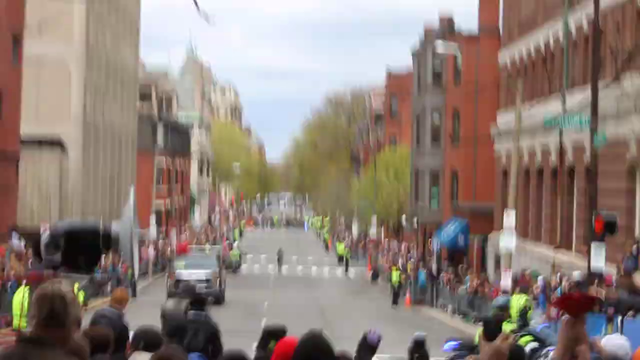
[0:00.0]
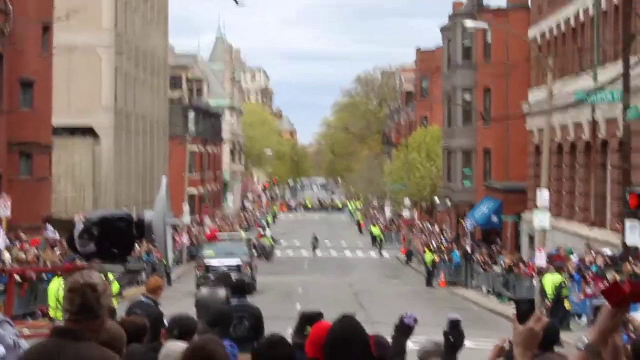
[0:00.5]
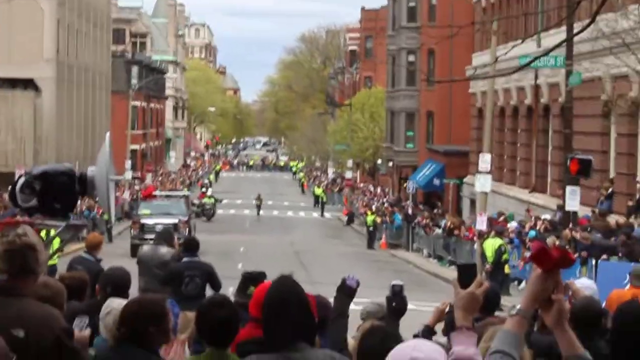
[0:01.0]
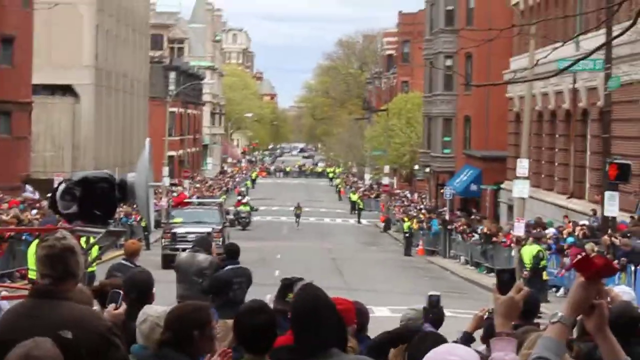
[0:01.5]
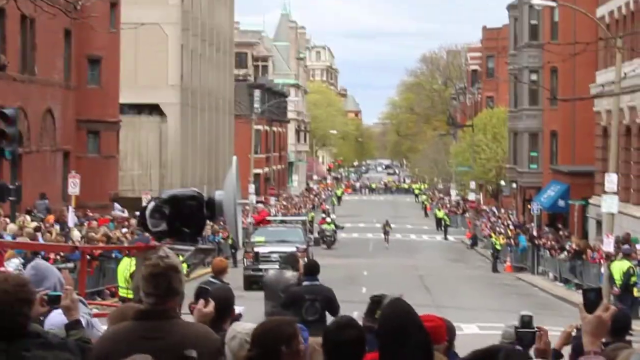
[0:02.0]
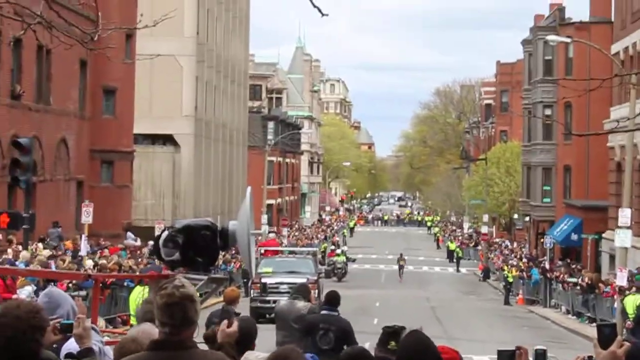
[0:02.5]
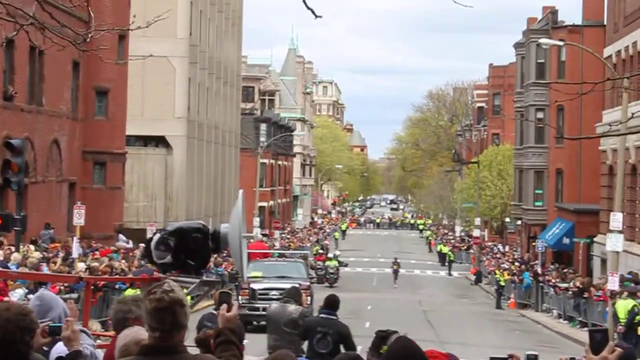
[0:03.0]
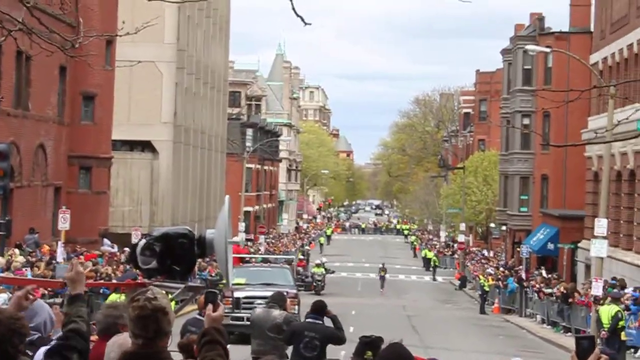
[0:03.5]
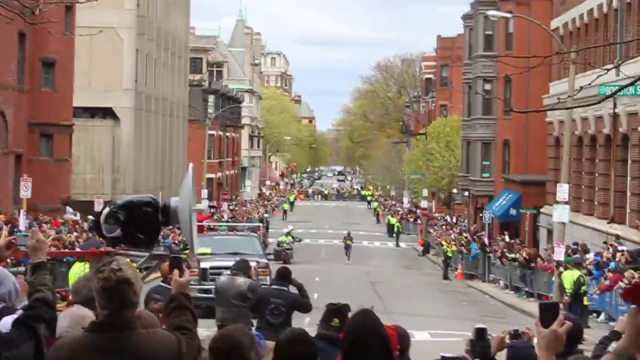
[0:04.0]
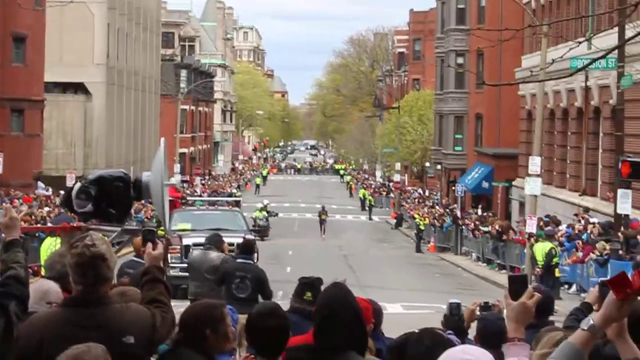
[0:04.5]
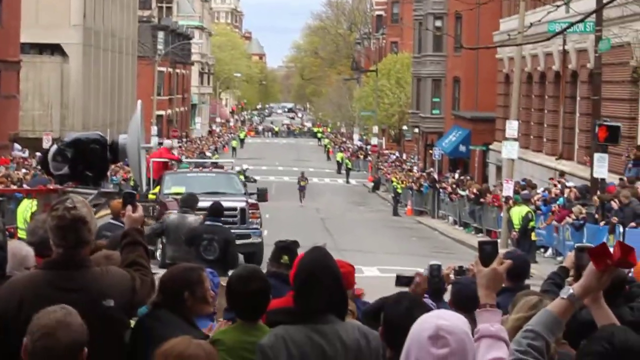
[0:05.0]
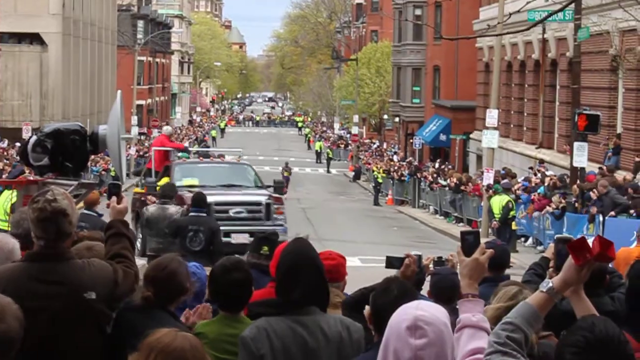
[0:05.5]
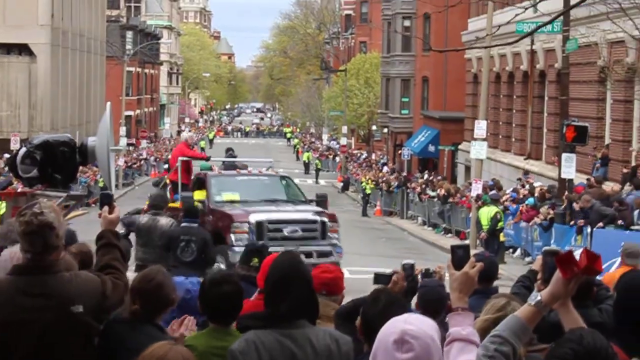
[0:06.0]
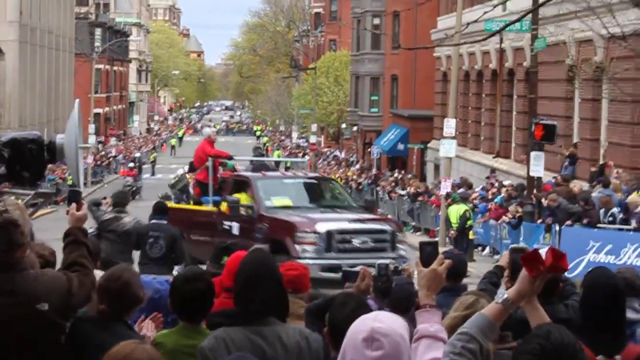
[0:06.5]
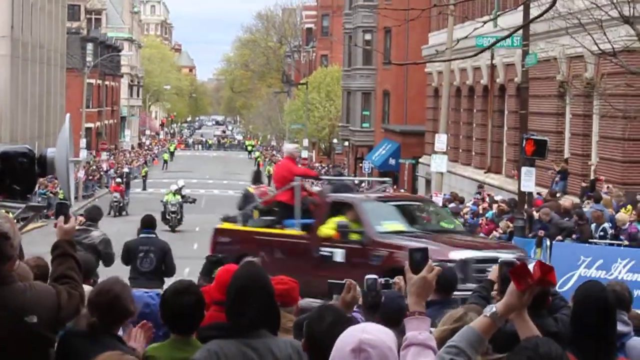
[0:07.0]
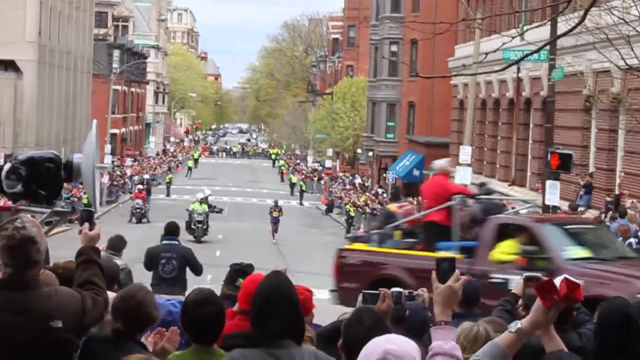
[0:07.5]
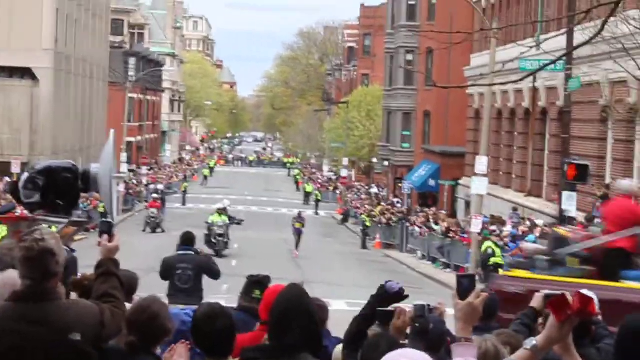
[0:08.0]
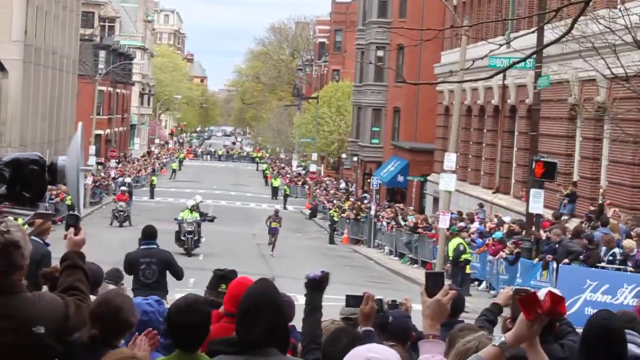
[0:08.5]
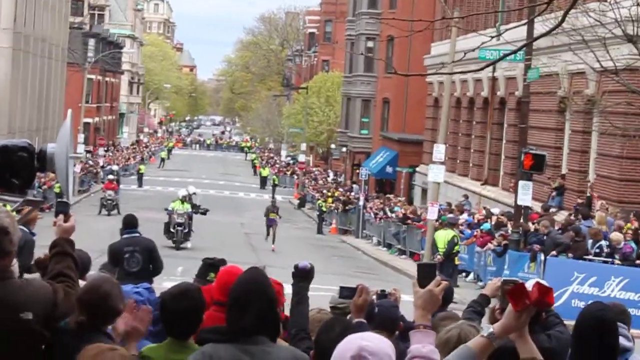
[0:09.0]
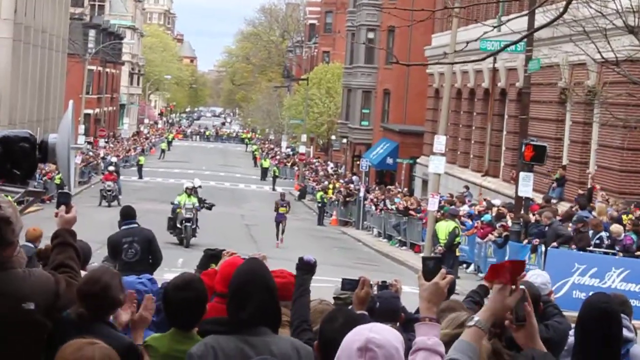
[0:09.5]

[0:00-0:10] The scene is outdoors in a city, with buildings on either side of a street and the camera aiming down the street. The camera is very shaky. A lot of people are outside, a big audience apparently there to watch something. Someone drives by in a truck, with several people in the back holding on to some railing or support. Apparently a policeman on a motorcycle follows, so it looks like an escort of some kind, and the crowd seems to be there to watch an event, a parade, or somebody entering an event. The city cannot be identified; the buildings look fairly nondescript. There are some awnings, barricades, a few banners with sponsors' names on the barricades, street signs, and traffic lights. It all looks very ordinary, but it looks like someone is being escorted somewhere in some kind of formal event.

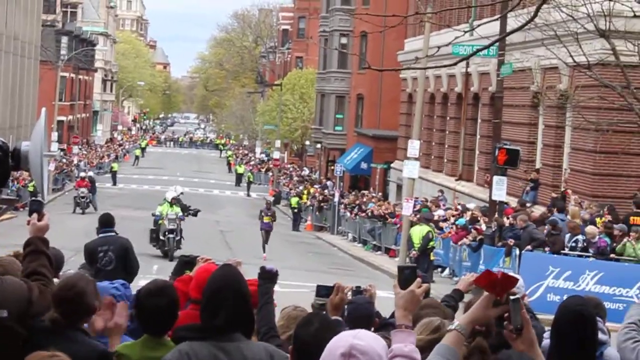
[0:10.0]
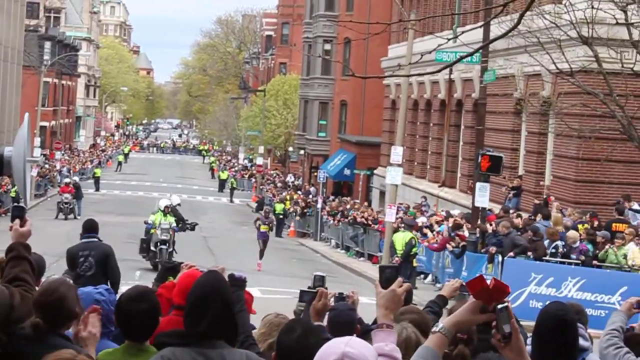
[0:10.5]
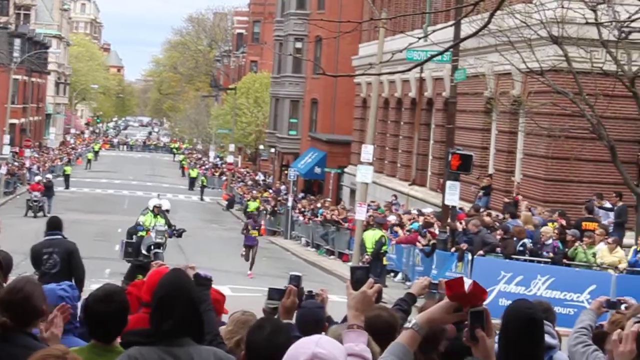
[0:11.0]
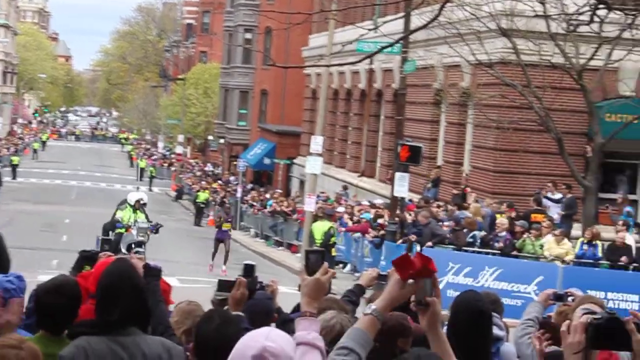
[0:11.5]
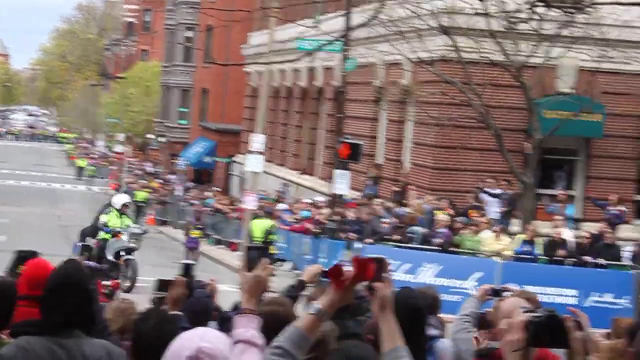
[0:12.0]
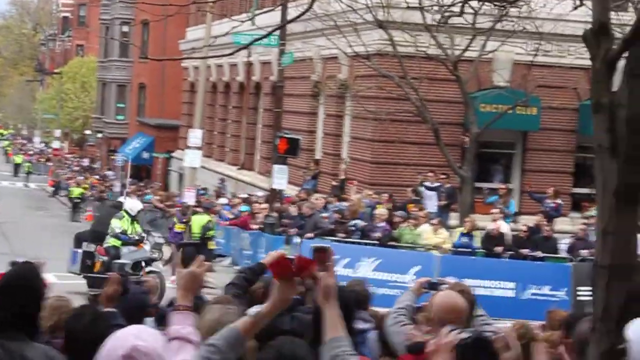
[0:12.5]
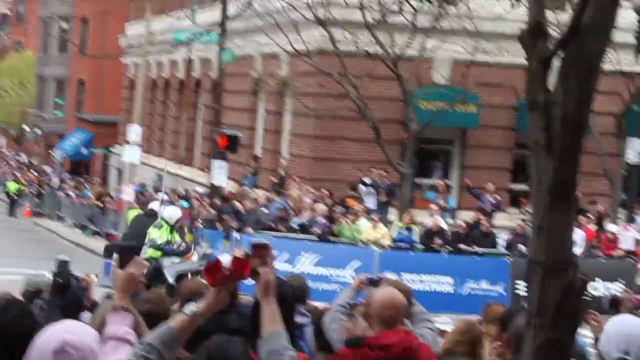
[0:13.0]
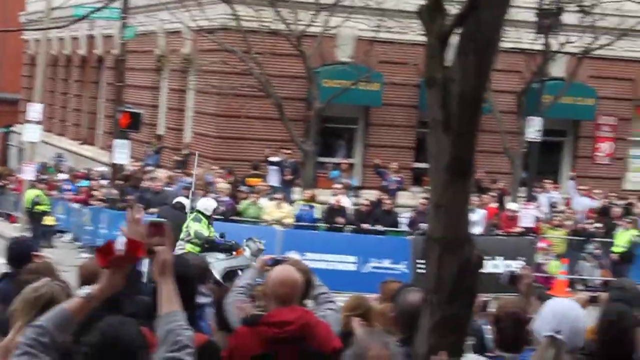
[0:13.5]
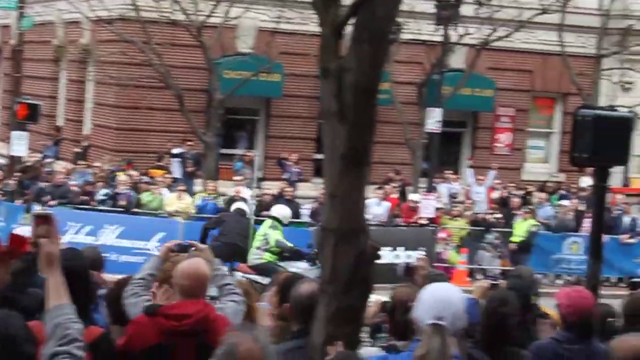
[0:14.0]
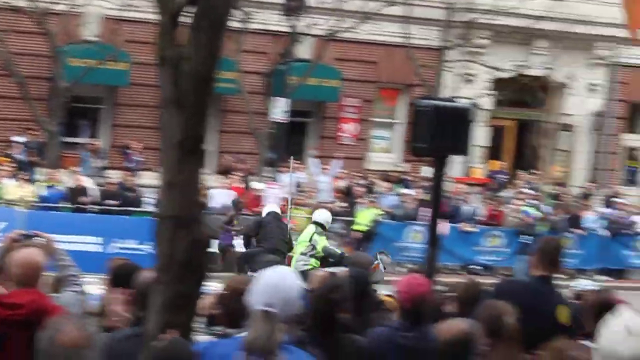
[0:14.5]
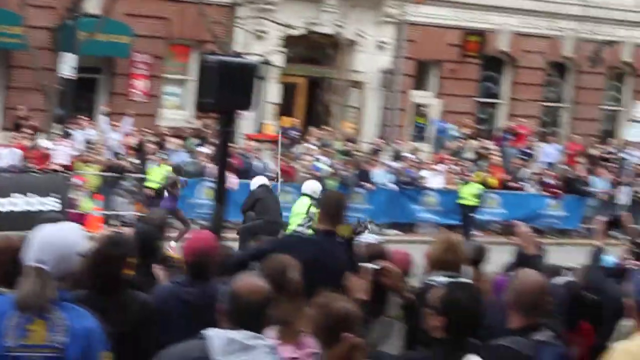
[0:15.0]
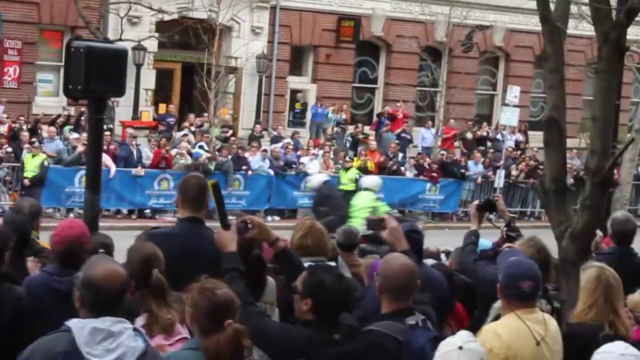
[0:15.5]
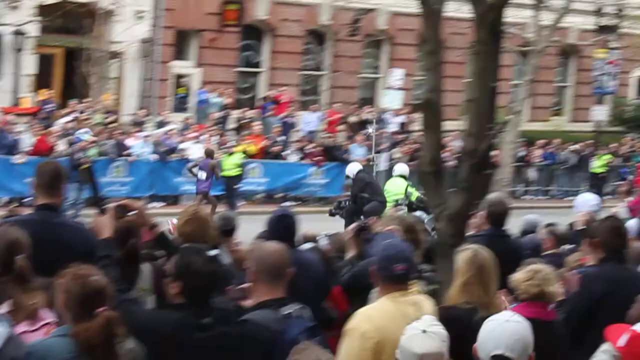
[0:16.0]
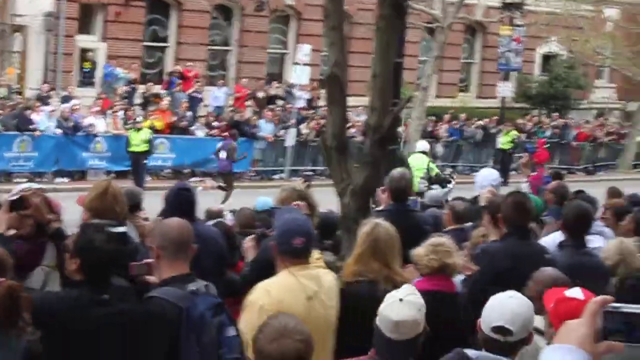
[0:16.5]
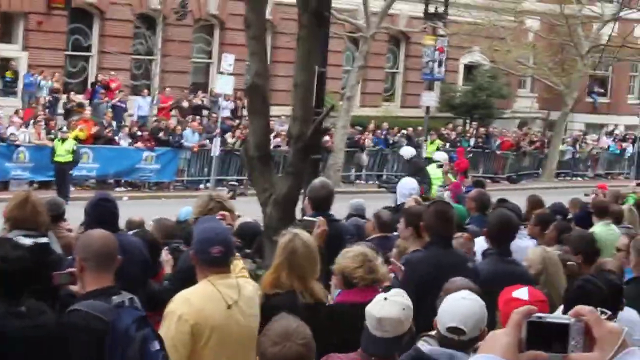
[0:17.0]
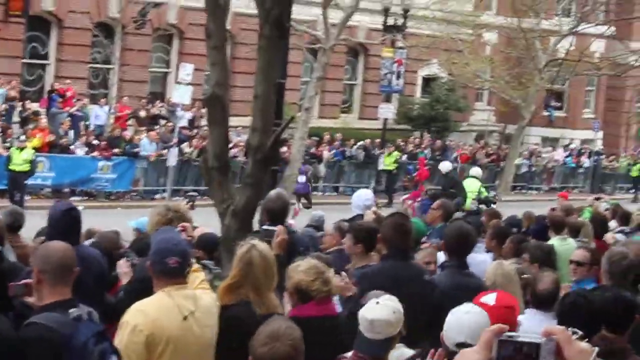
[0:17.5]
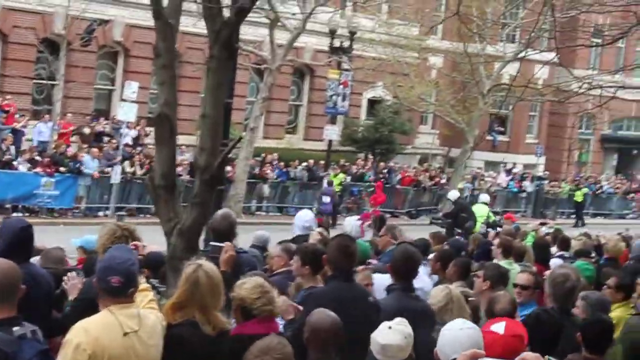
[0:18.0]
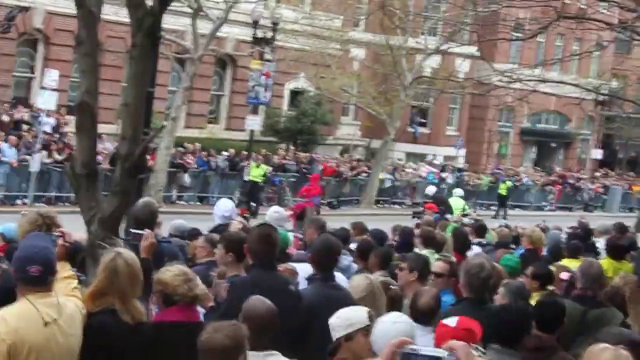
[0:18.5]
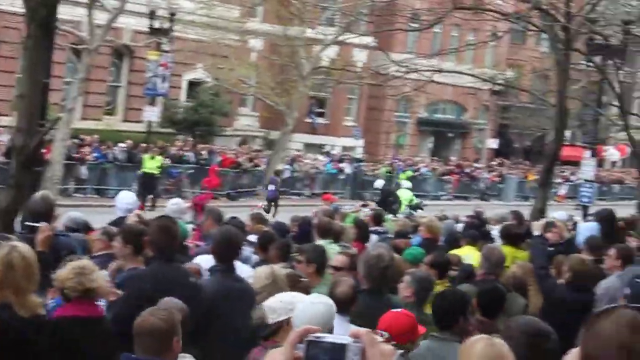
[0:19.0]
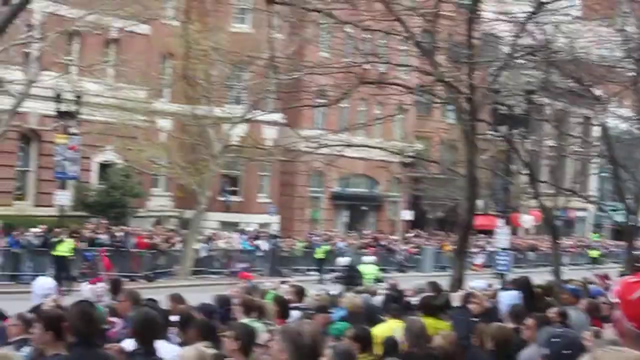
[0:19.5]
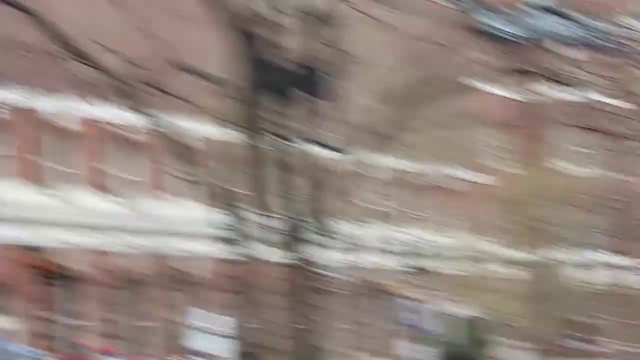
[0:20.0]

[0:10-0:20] A motorcycle is entering the frame down the street while people in the crowd watch, some holding smartphones up in the air to film. A man is running, apparently in a marathon event of some kind, and the motorcycle is just beside him. The motorcycle carries a film crew: someone drives it while a man sitting behind him operates a camera to get close-up shots of the runner. The camera follows, showing both the motorcyclist and the man running. The runner wears a blue uniform, and a big crowd watches him. The camera is very shaky. Trees are visible in the distance. The man runs down the middle of the street, which is barricaded and blocked off, and the camera follows him as the street curves. At the very end the camera pans up.